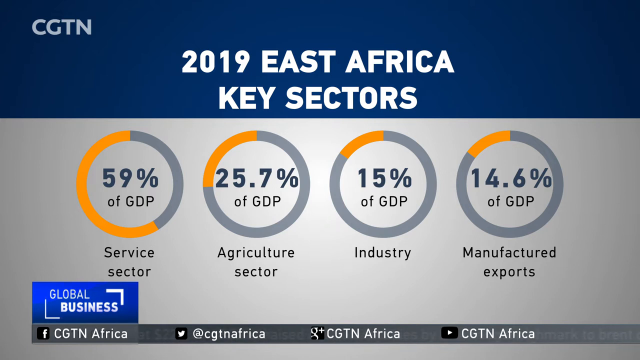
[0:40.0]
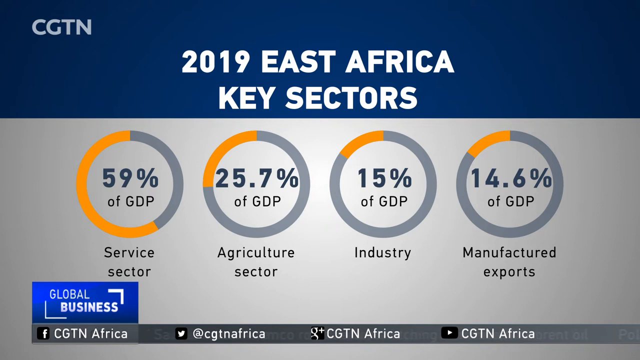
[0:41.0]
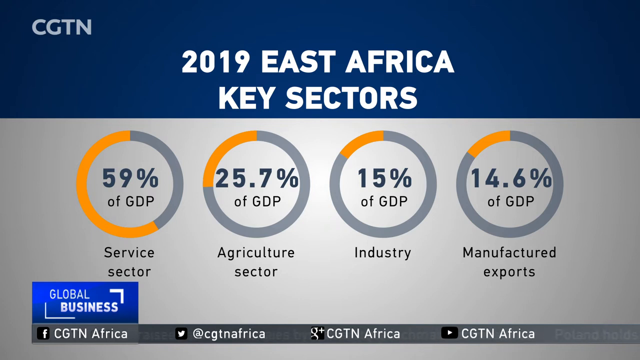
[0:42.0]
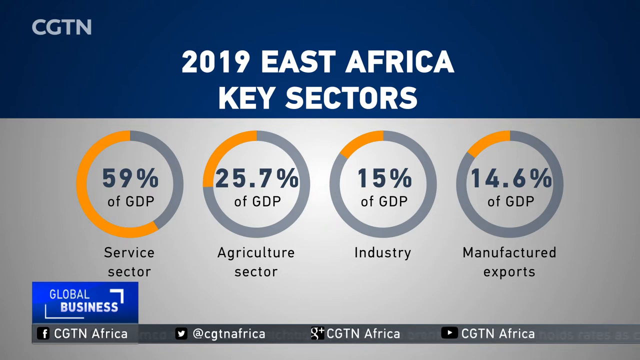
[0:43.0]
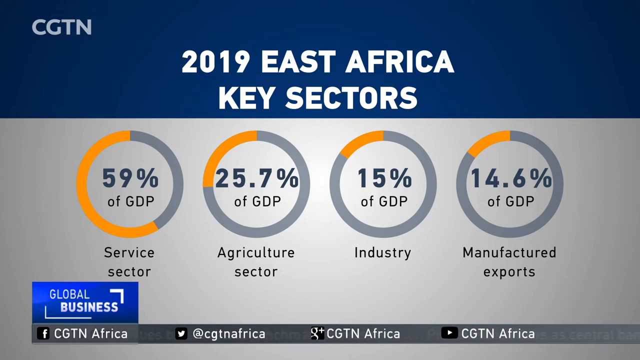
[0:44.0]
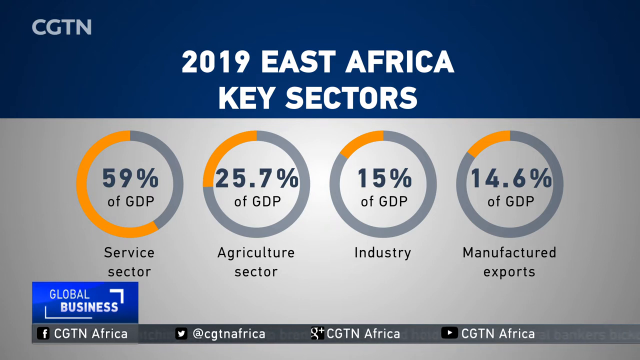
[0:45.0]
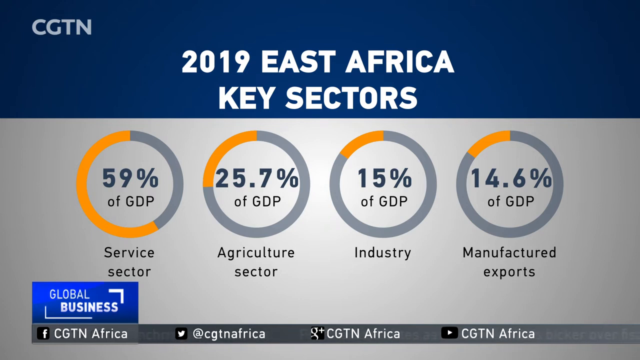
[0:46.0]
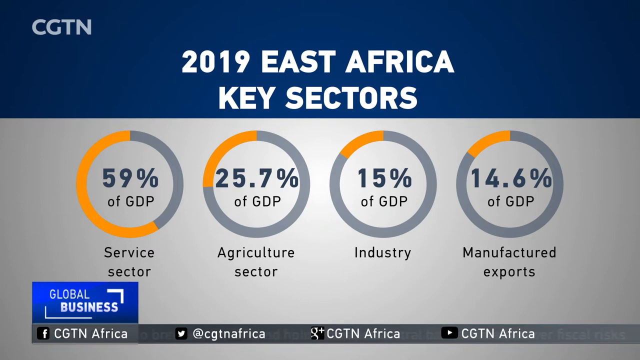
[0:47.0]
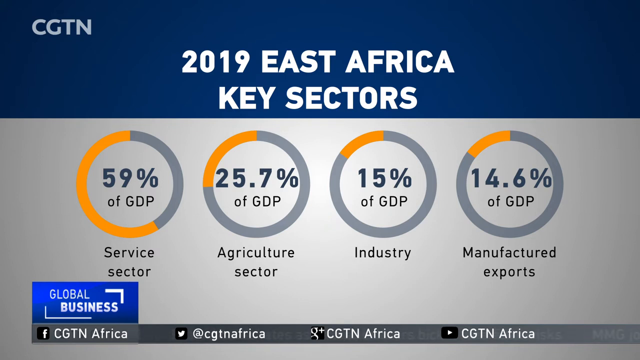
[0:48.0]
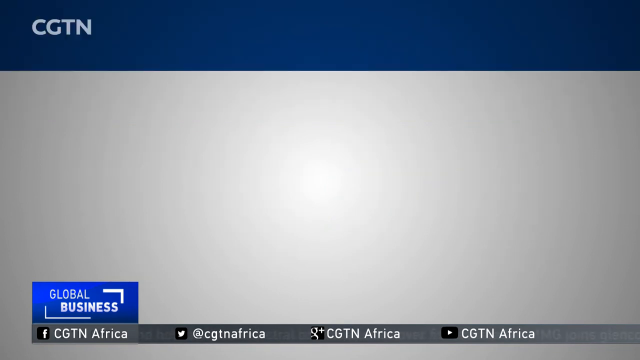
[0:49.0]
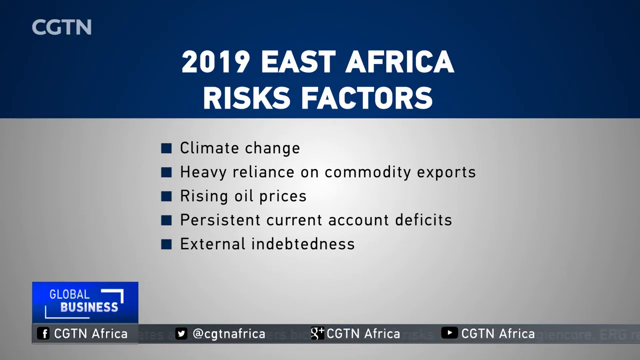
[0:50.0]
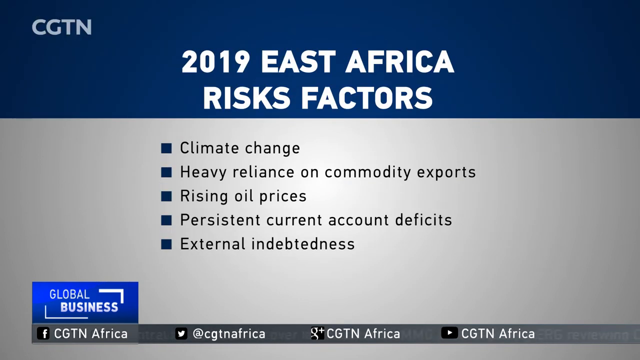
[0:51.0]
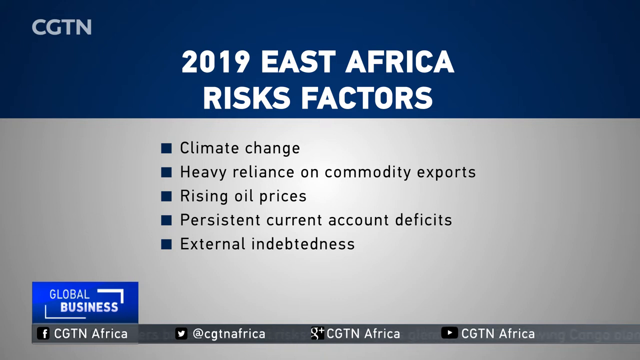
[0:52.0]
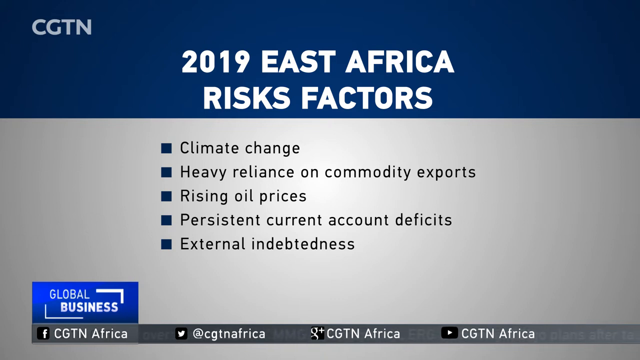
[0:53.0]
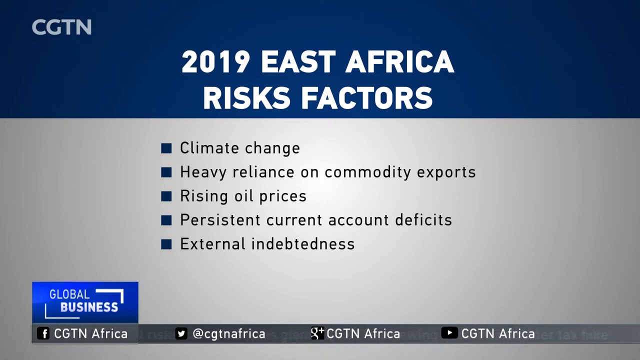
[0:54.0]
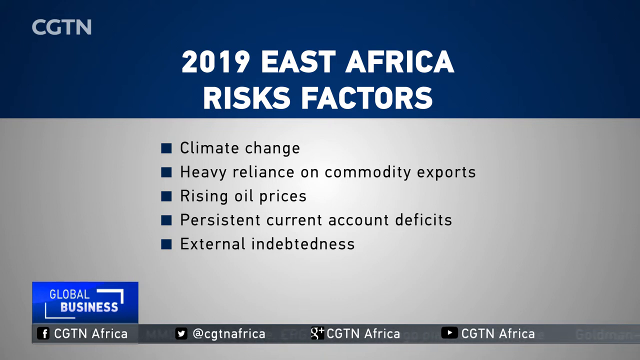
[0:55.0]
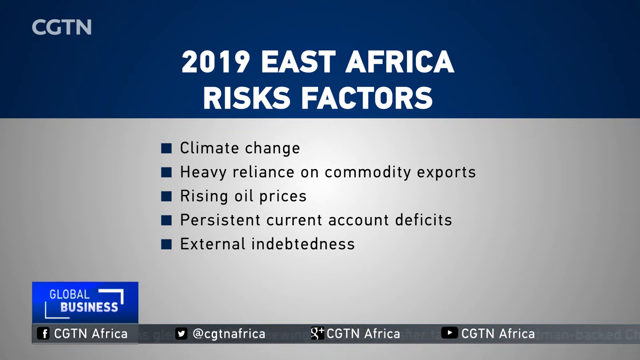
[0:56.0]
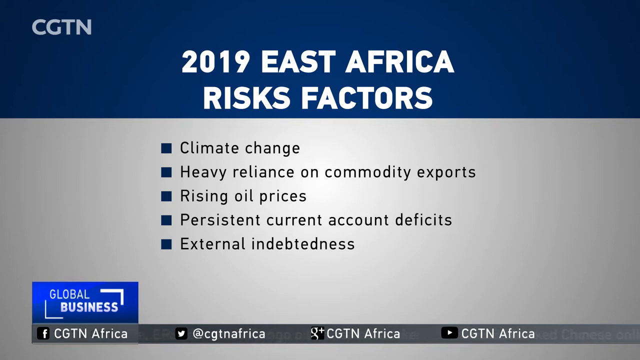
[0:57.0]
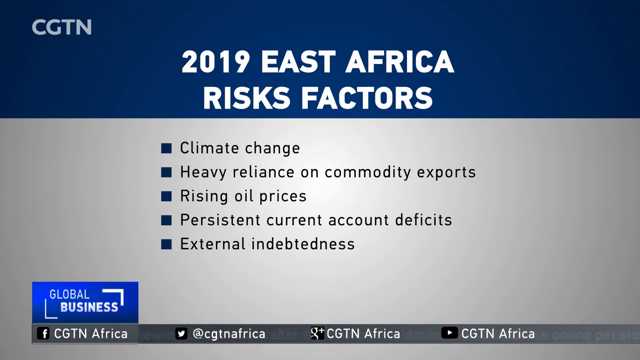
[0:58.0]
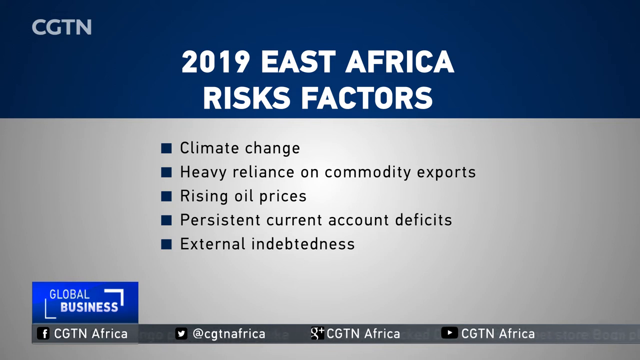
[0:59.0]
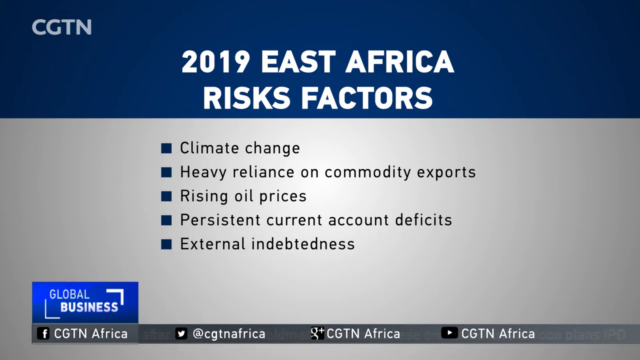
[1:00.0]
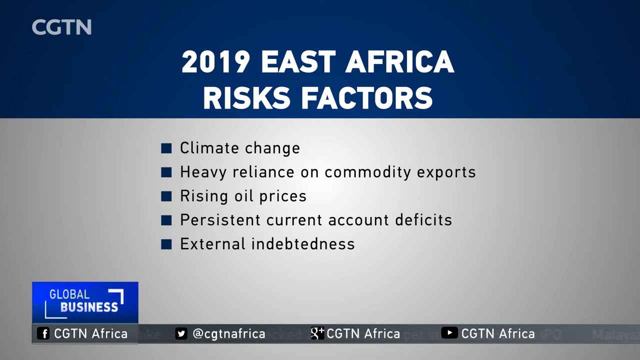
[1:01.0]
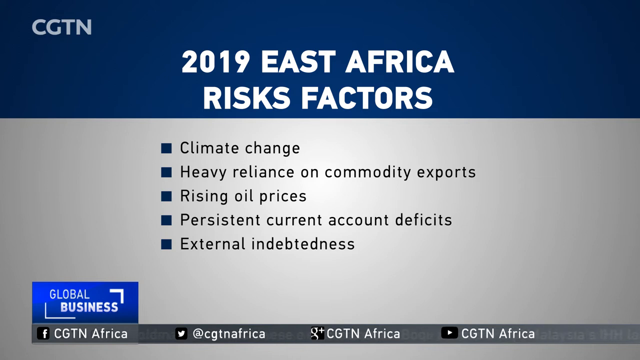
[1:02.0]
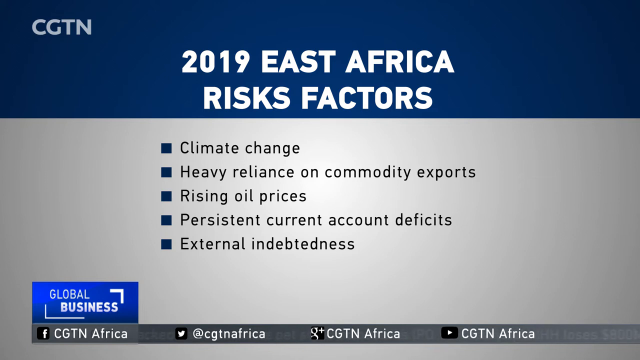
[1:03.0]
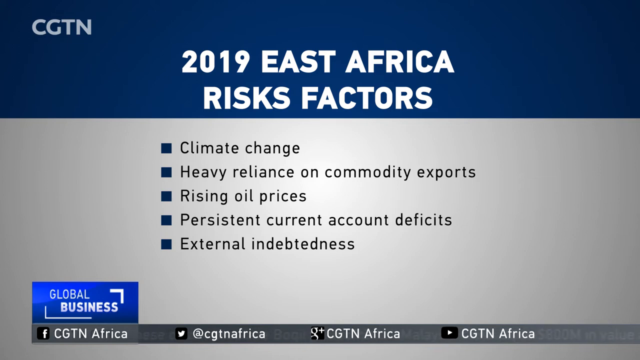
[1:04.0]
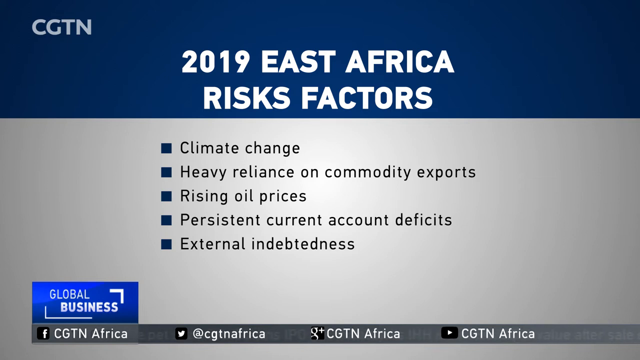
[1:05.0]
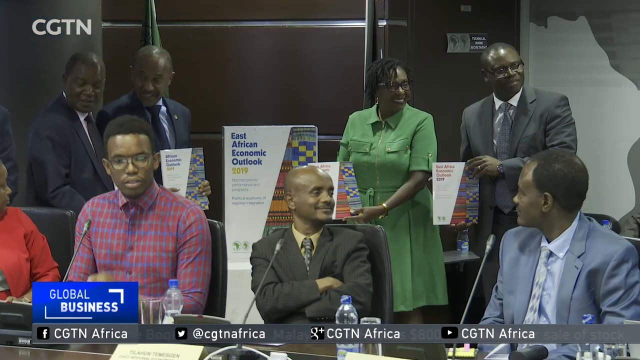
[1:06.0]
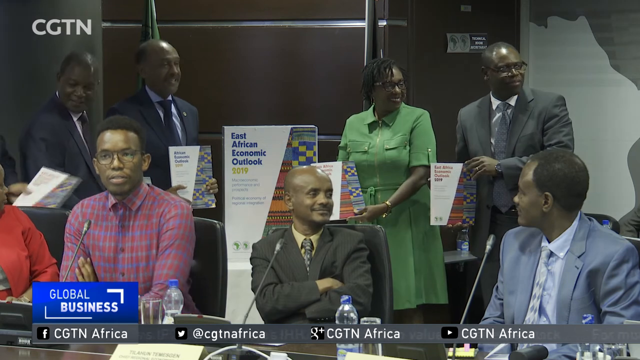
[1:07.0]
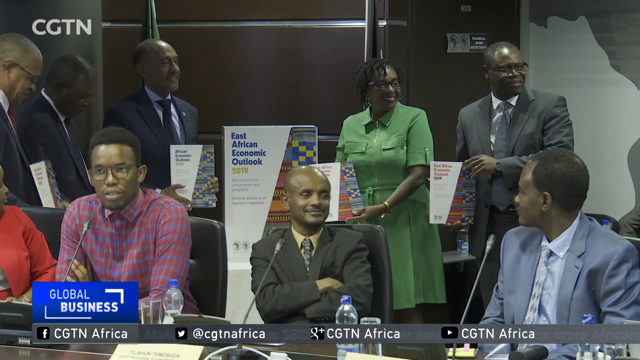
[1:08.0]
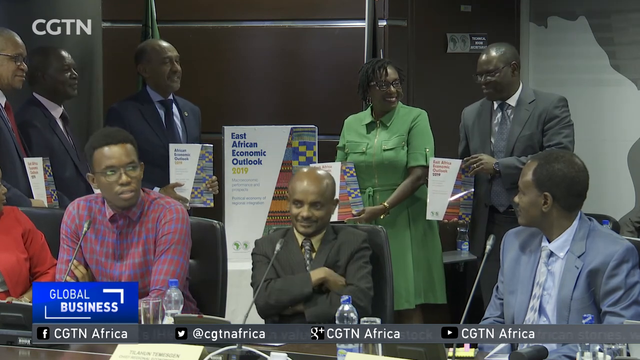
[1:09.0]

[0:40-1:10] The four circles stay on screen, then the screen changes to "2019 East Africa Risks Factors." The title is in a blue banner at the top, and underneath, on grey, five bullet points each marked with a blue square read "climate change", "commodity exports", "rising oil prices", "persistent current account deficit" and "external indebtedness." After several seconds the scene switches to a live scene of eight people, all Black Africans, four seated at the front and four standing at the back. Seven figures are most visible. At the bottom right, a man in a suit with a grey patterned tie is turned to talk to the person next to him, who faces him and also wears a suit. Another man at the front, wearing glasses and a red chequered shirt, looks forward to the camera. At the back, a man in a suit holds a brochure, and a woman next to him in a green dress is smiling and laughing; both look slightly toward the right side of the screen. On the left, two men are engaged in conversation.